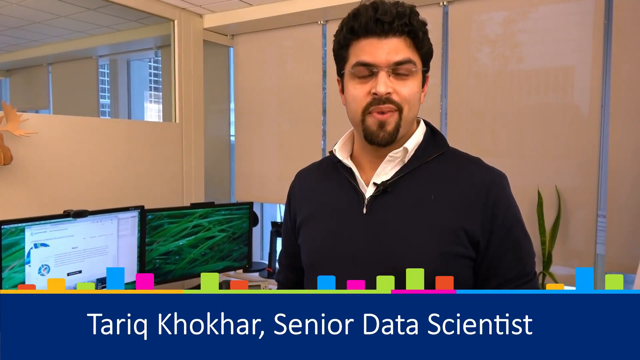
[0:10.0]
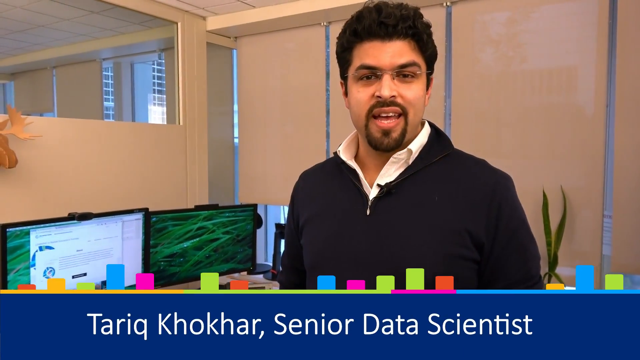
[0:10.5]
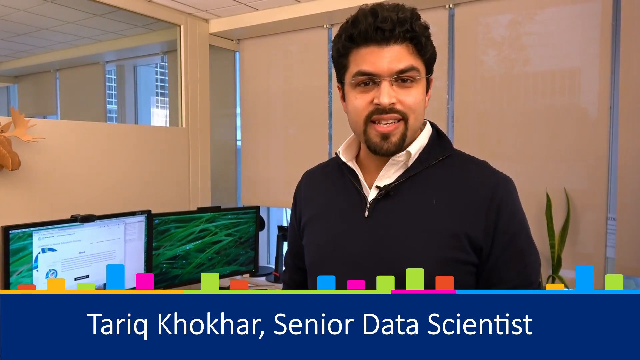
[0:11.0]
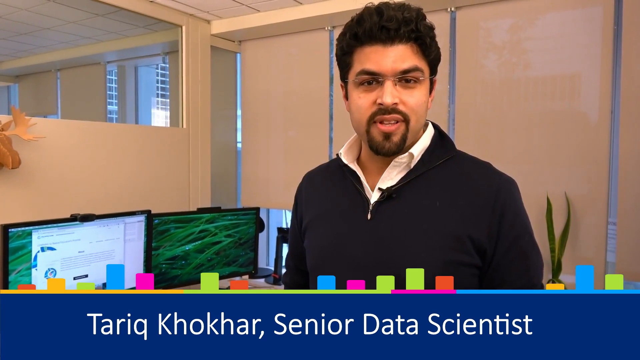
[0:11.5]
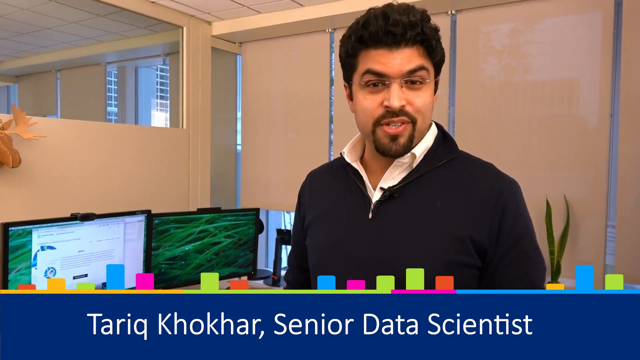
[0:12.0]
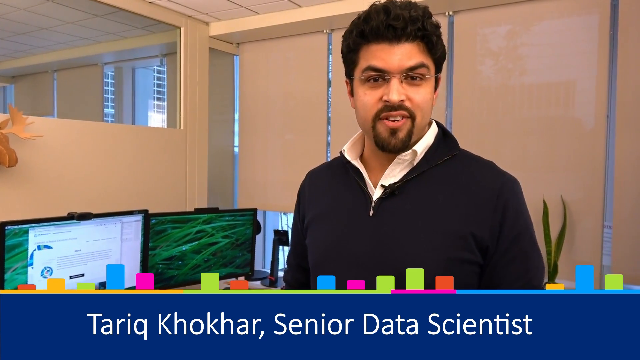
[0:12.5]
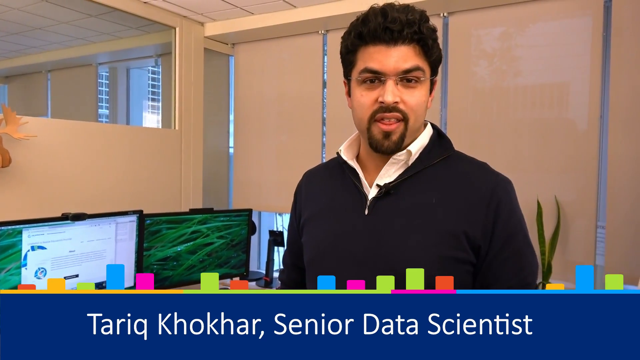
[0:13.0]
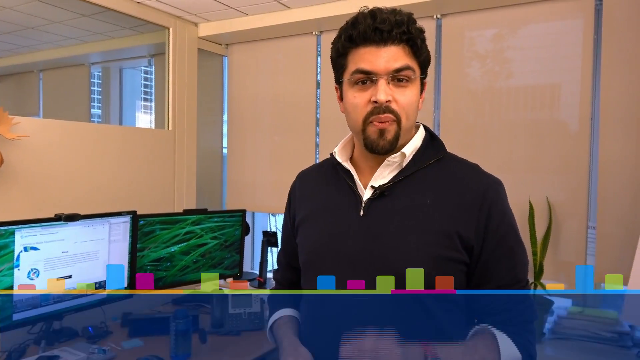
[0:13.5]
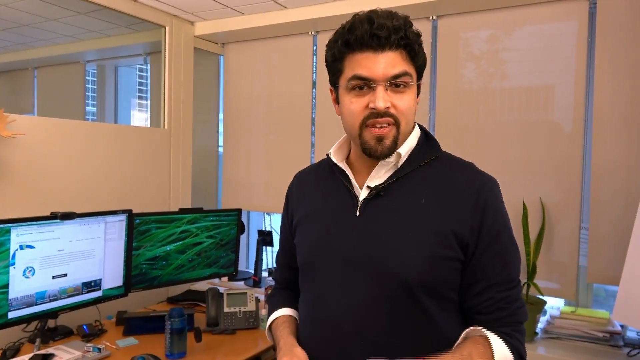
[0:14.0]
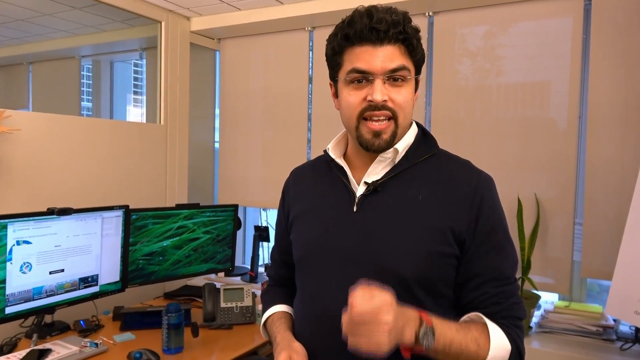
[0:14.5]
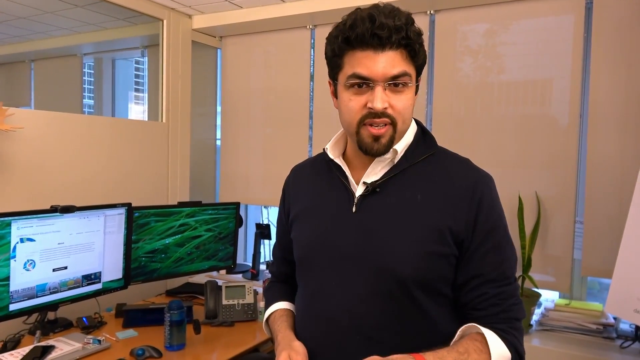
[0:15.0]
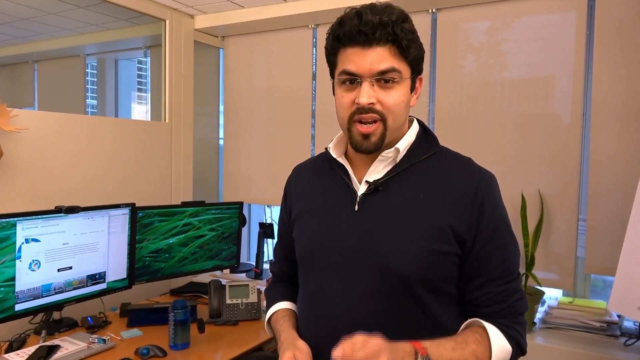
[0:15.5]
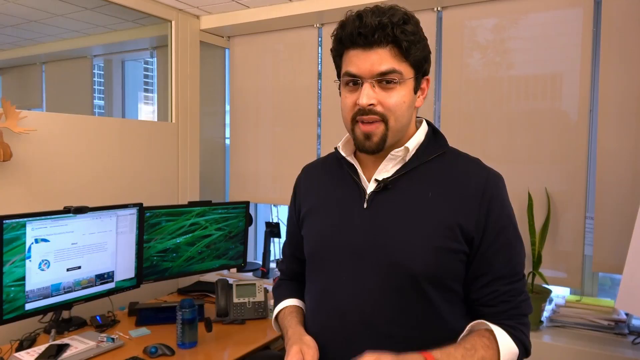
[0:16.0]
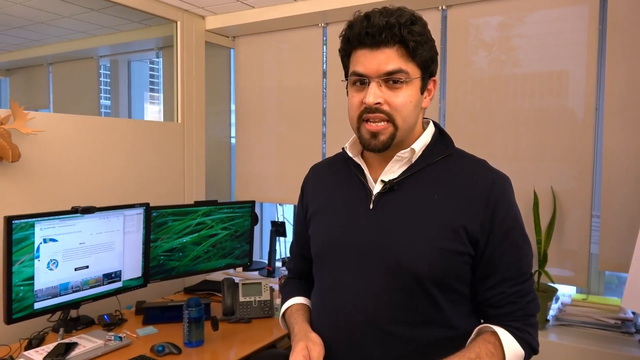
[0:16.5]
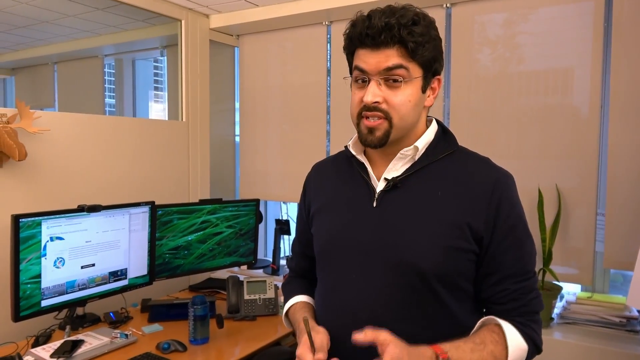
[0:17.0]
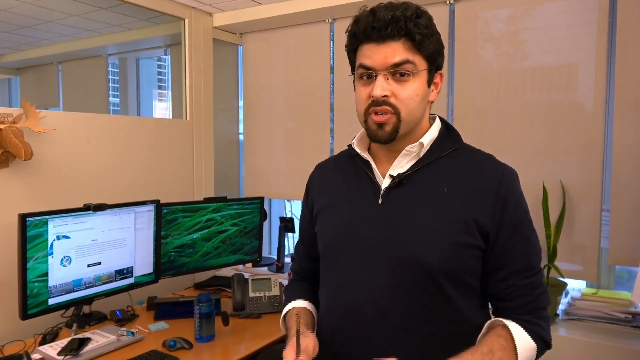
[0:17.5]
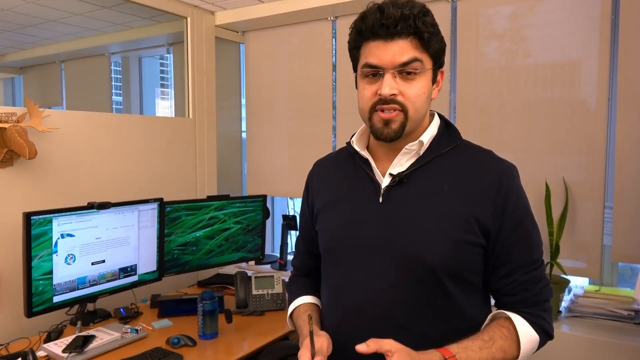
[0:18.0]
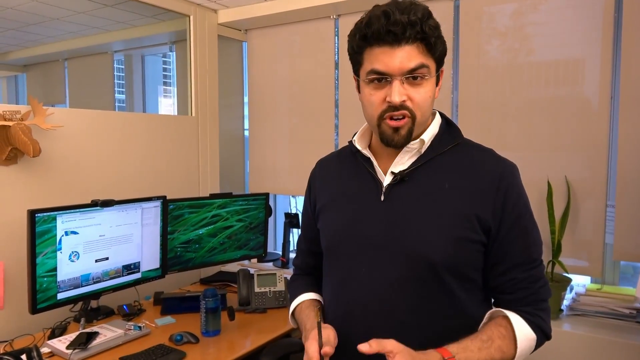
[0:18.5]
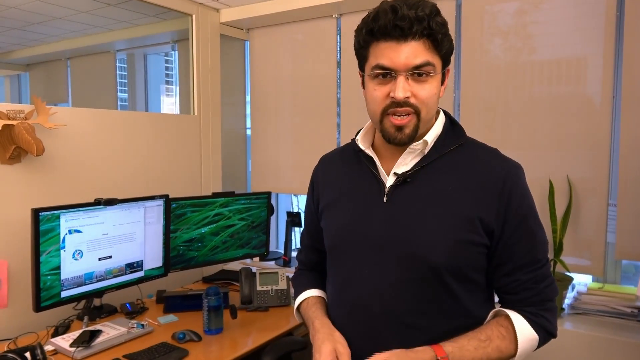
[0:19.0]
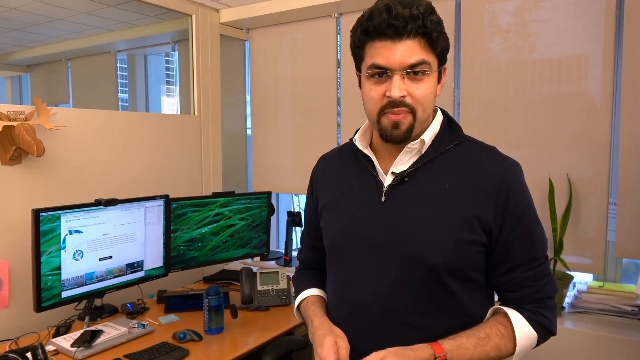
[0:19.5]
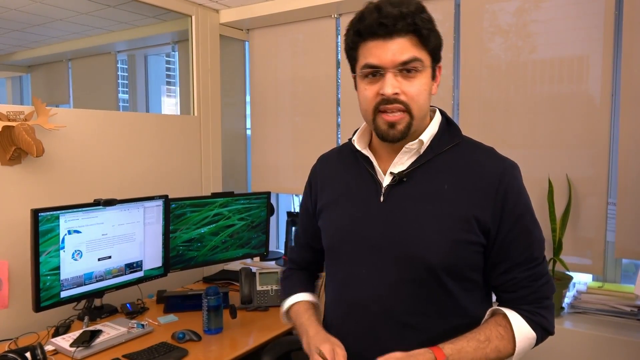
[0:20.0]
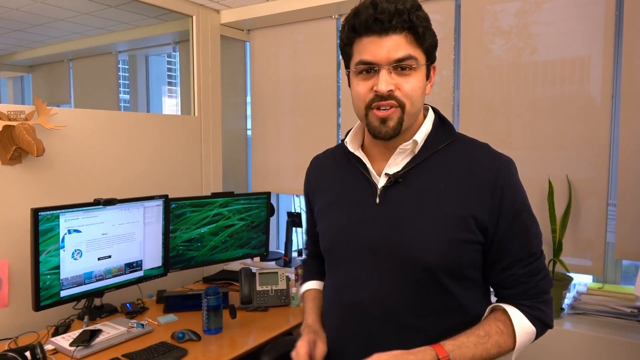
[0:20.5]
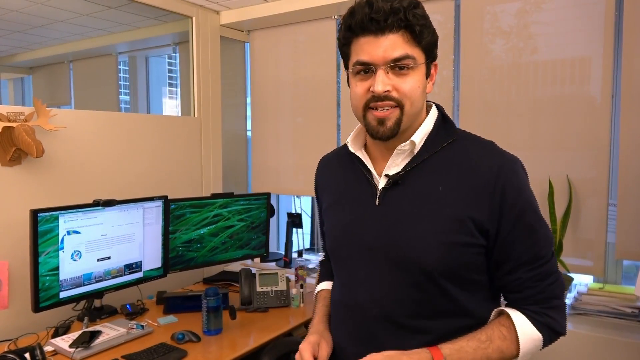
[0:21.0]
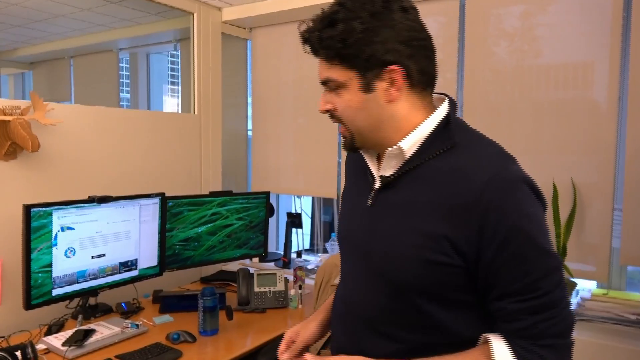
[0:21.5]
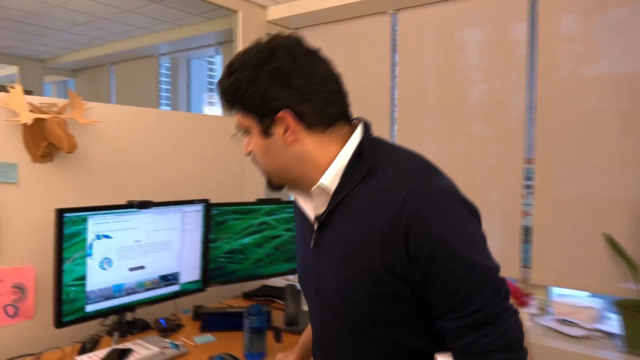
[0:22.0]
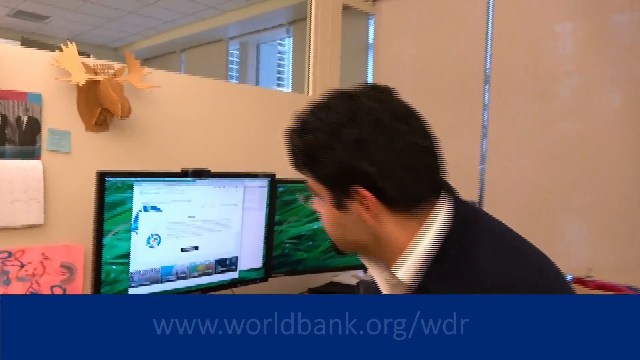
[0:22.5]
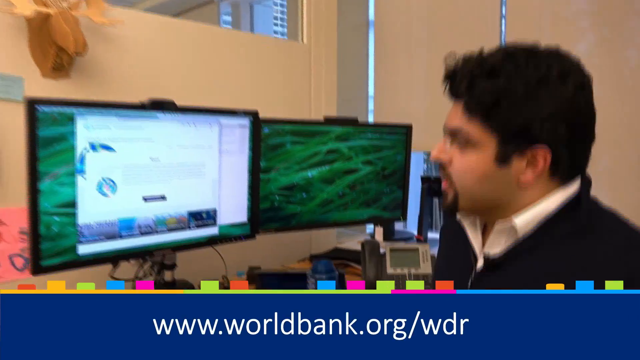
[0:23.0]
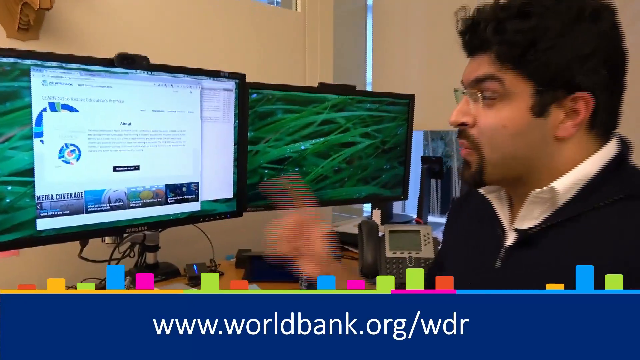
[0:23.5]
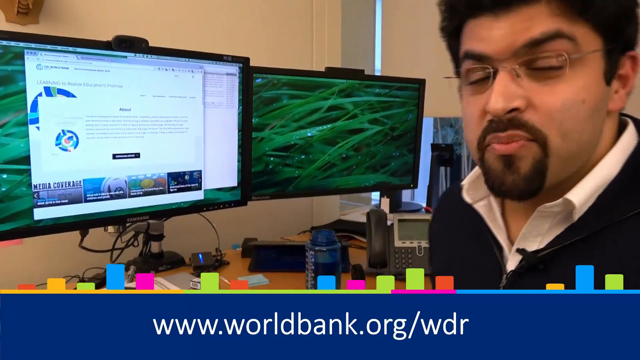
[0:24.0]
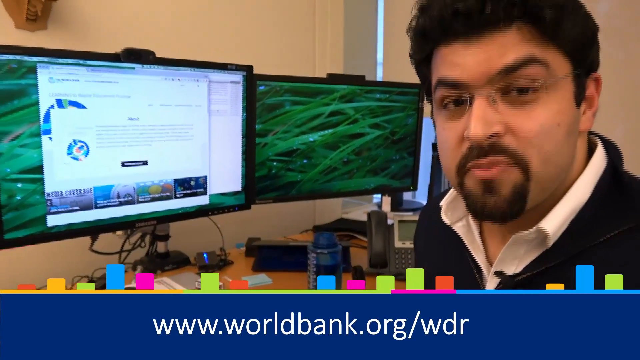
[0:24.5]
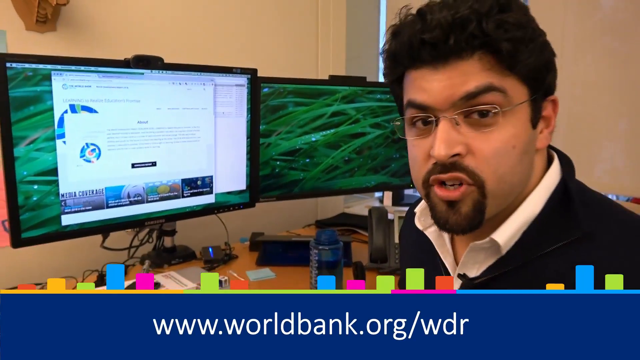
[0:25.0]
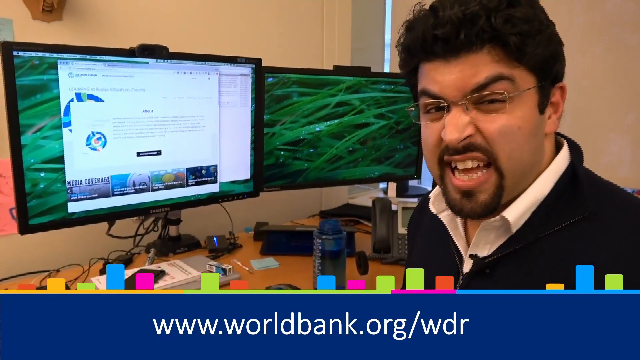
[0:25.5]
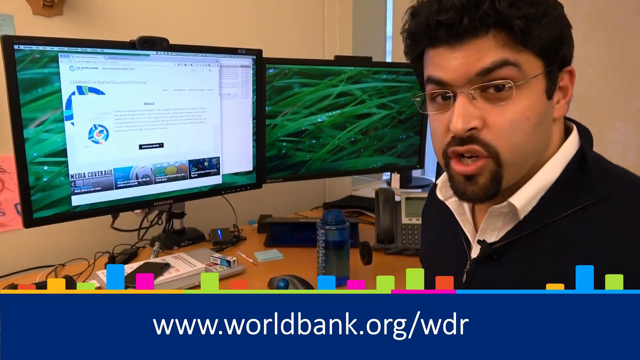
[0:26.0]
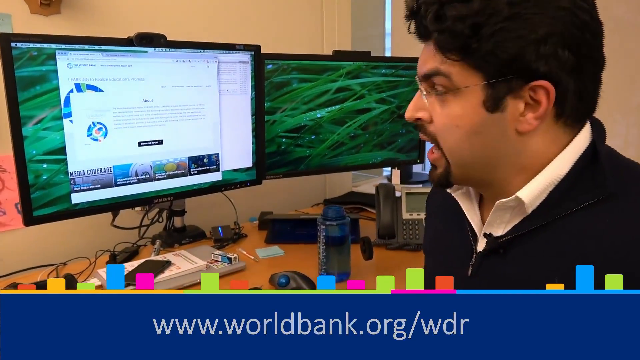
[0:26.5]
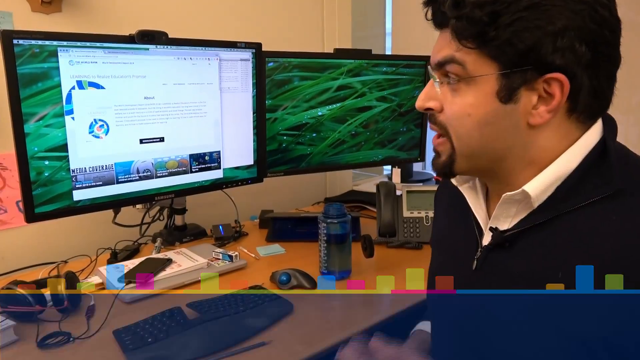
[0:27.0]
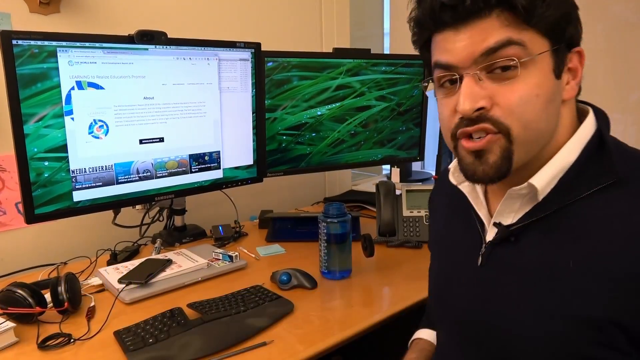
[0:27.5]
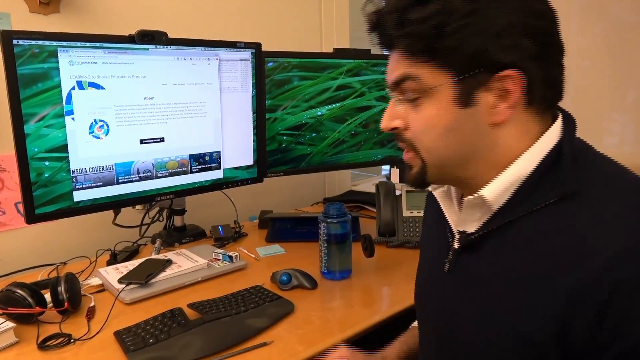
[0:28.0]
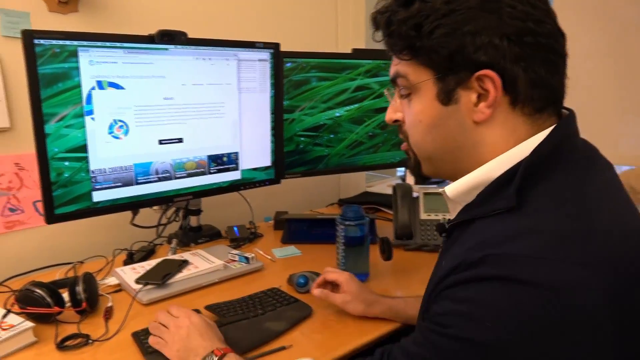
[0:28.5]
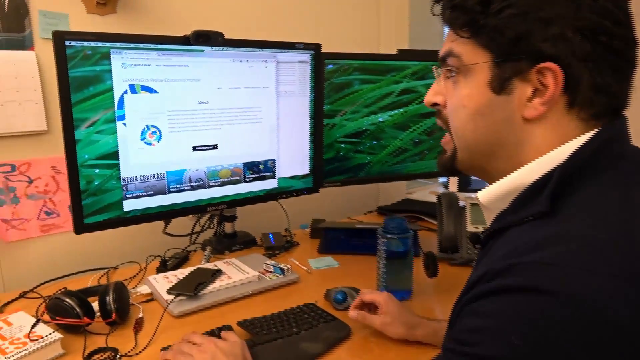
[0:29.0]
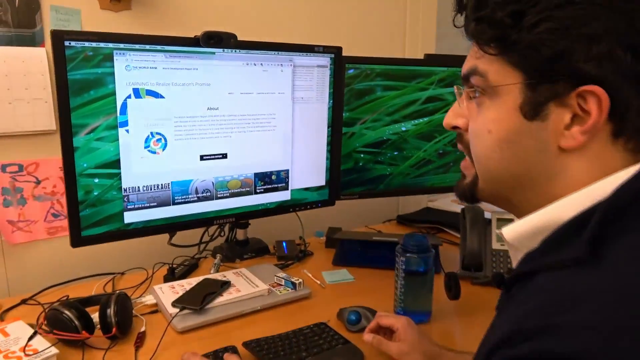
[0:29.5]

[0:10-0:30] The man speaks directly facing the camera. The camera seems to follow him; it does not zoom in and stays at a distance. His hands are in fists and he is kind of waving them. The camera then backs away from him and follows him, cutting to the left, as he goes to a chair and sits down. He enters information into the computer, which involves something called World Bank org.